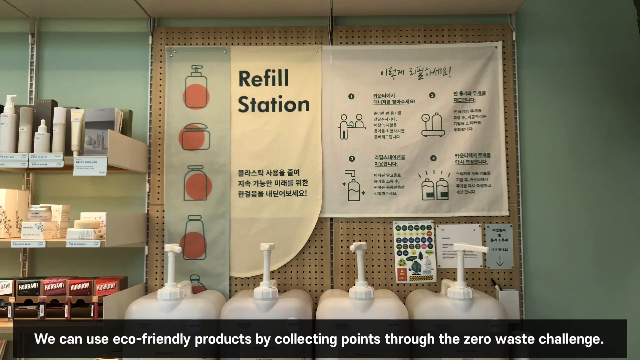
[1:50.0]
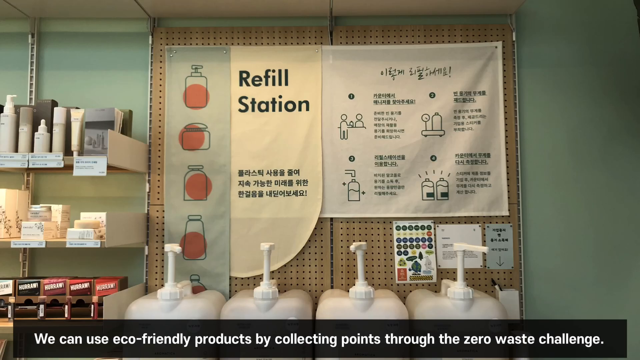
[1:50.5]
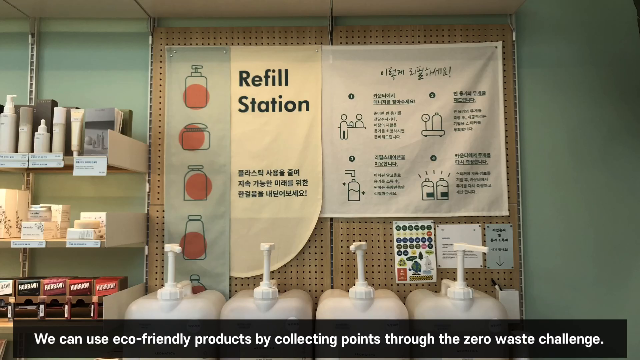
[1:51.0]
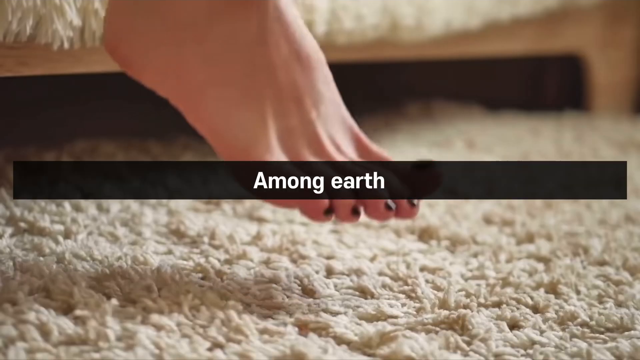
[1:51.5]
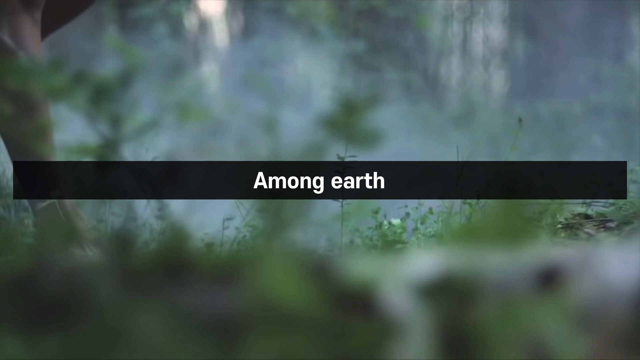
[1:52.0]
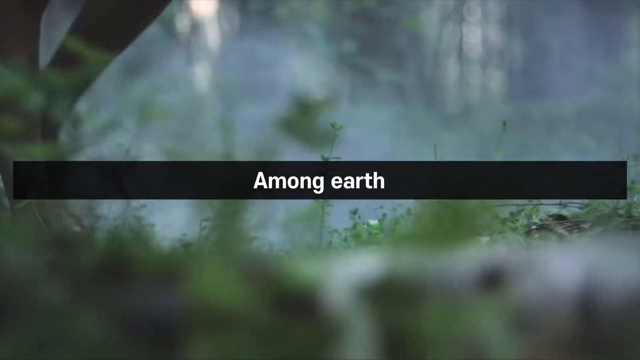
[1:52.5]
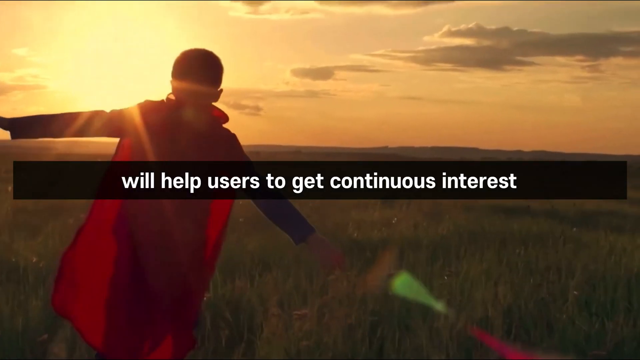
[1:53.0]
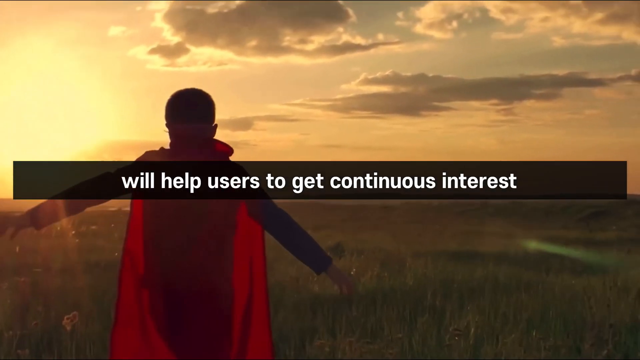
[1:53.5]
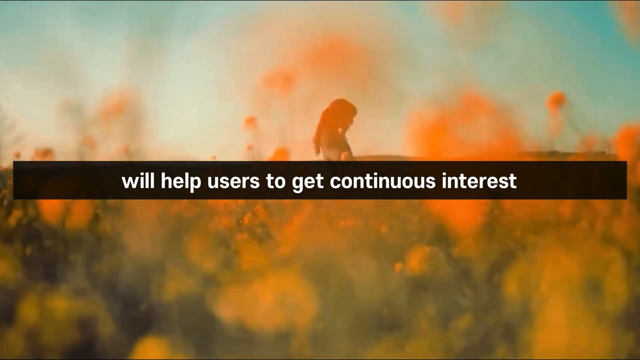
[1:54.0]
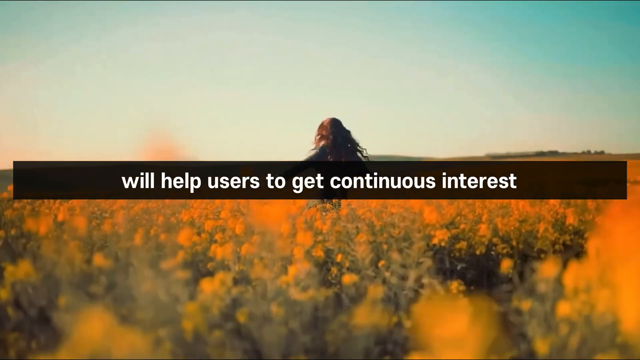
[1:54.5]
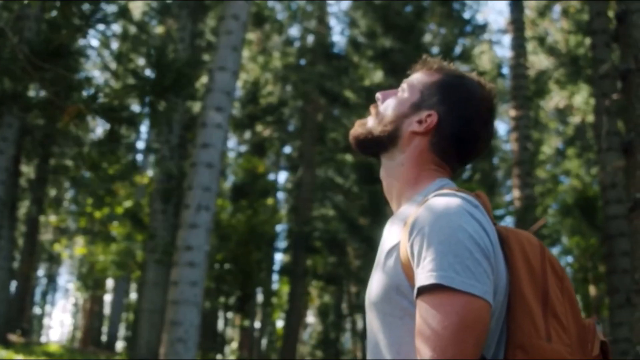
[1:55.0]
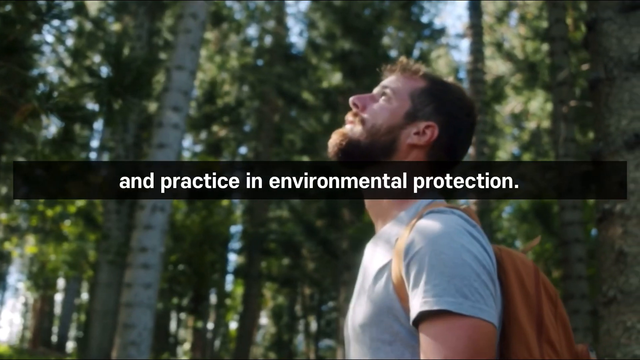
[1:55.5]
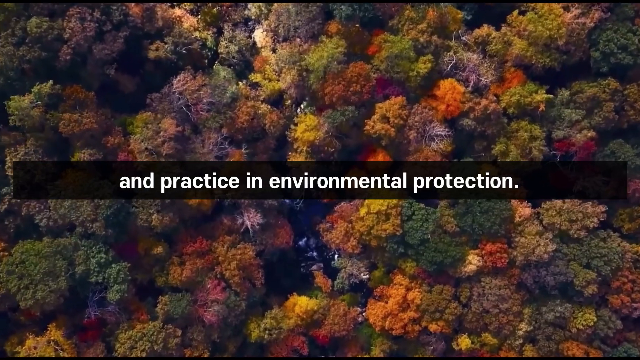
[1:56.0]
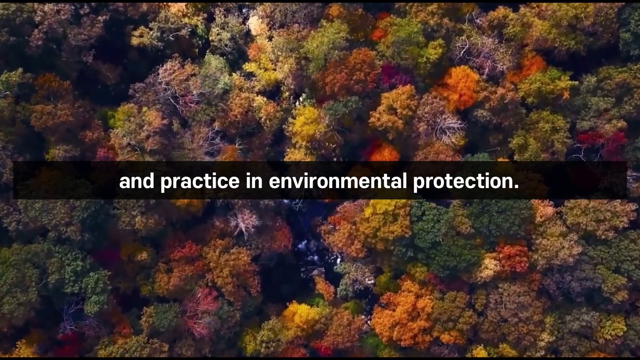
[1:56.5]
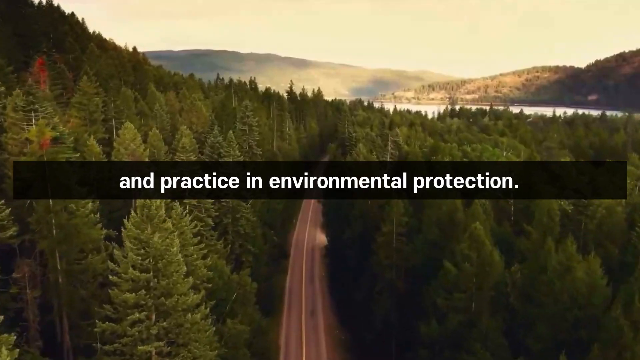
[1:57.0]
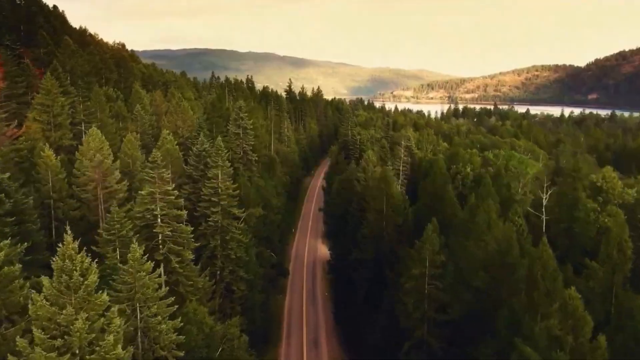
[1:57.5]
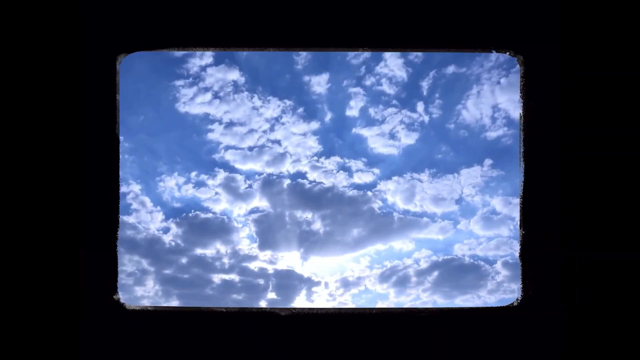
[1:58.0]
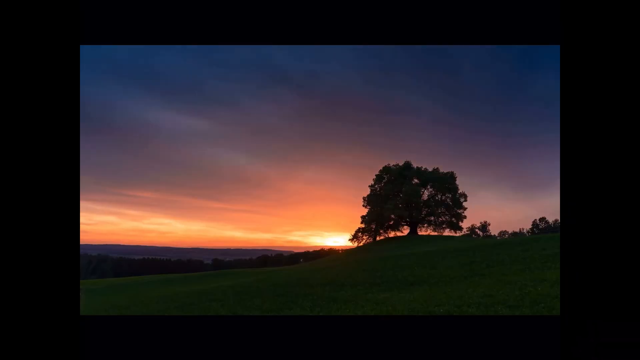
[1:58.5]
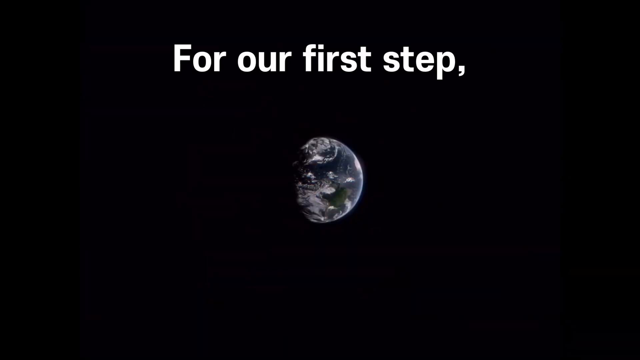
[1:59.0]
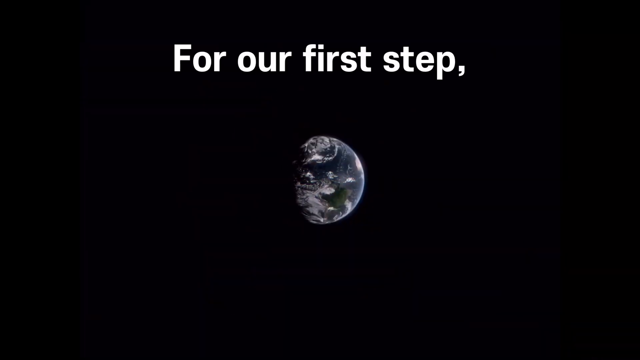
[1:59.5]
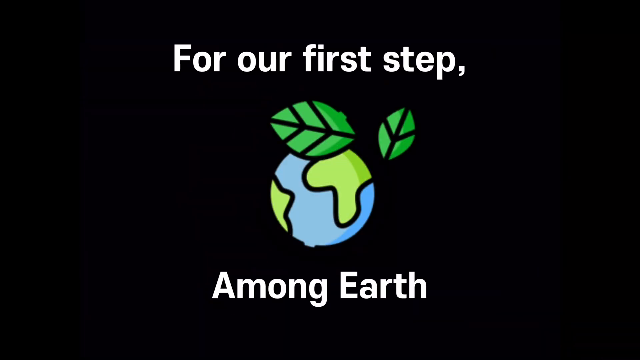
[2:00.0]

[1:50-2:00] A refill station sign appears, with four large bottles at the very bottom. The sign has a description written or typed in Korean, possibly explaining instructions for the station. Products are displayed to the left of the sign. The scene pans over to the words "Among Earth" in white font in the center, with a naturistic view in the background, a boy wearing a red cape, and the sun having set. It transitions to a girl spinning around in a field of flowers, with the words "and practice in environmental protection" in the center over trees of various colors in hues of orange and green. The scene pans over to a road with trees at the side, and at the very end a globe appears in the last scene.